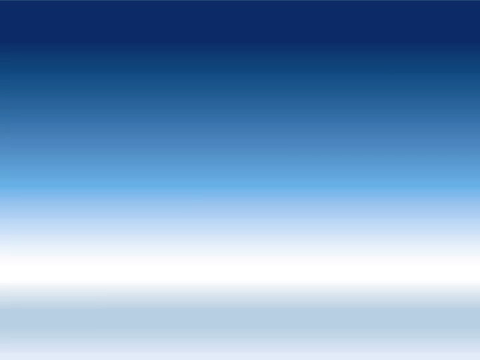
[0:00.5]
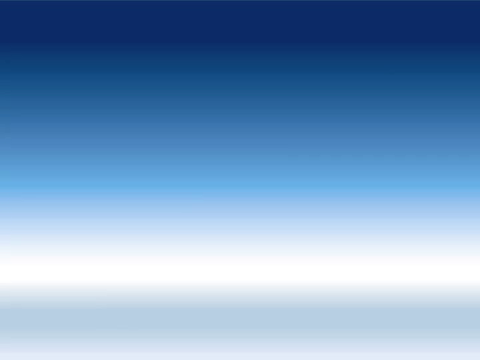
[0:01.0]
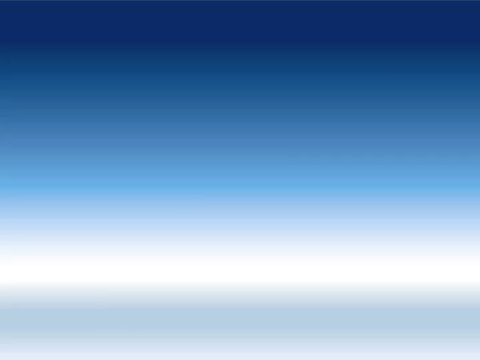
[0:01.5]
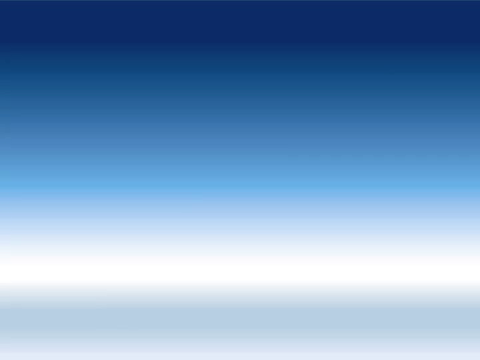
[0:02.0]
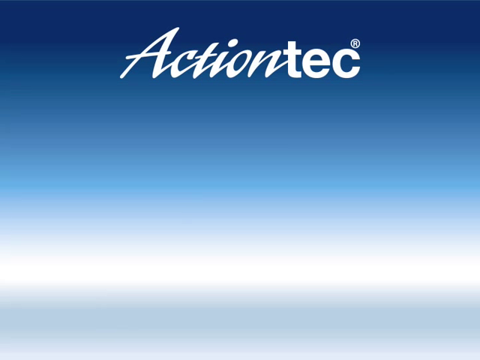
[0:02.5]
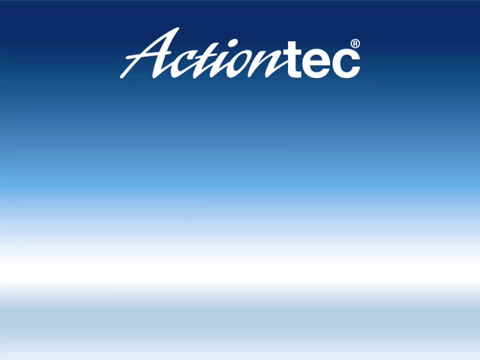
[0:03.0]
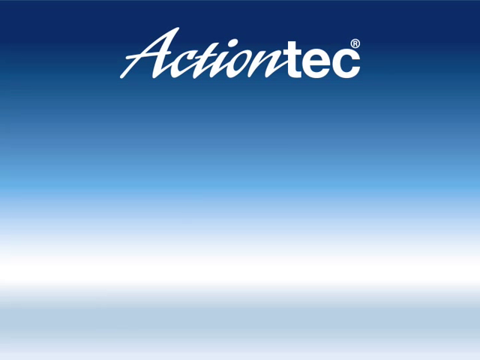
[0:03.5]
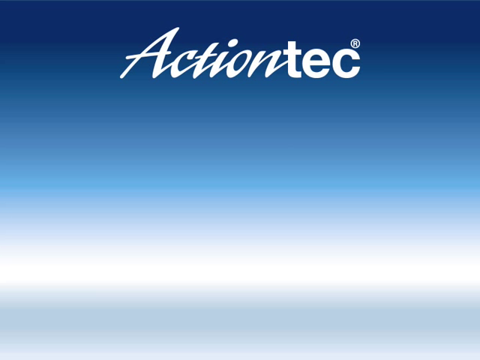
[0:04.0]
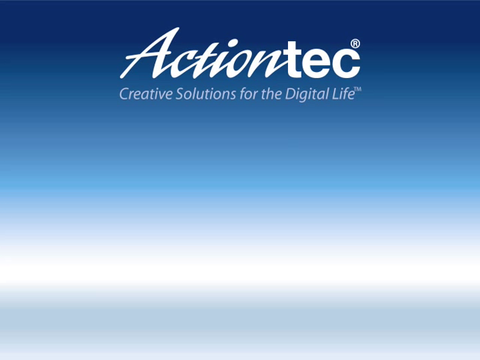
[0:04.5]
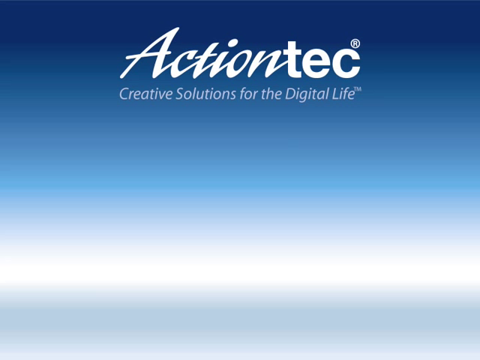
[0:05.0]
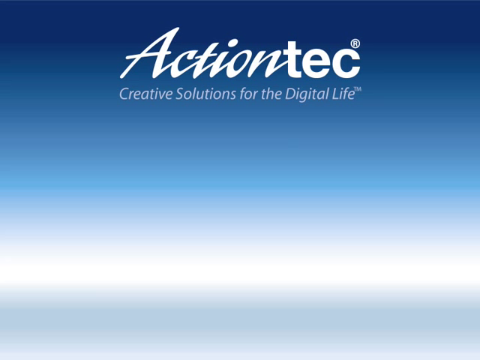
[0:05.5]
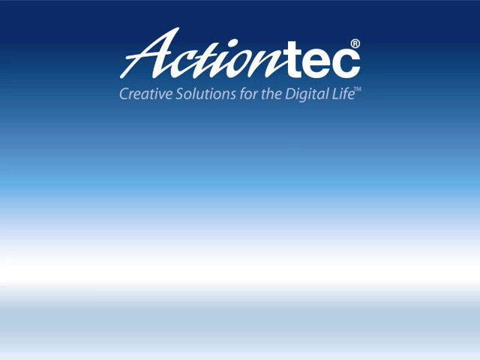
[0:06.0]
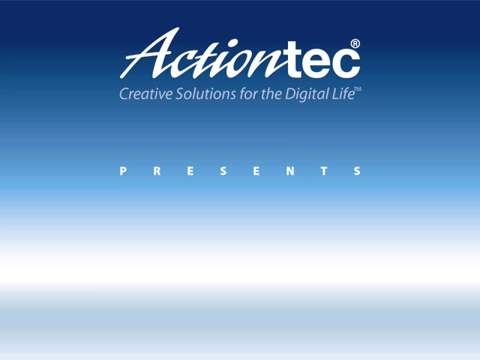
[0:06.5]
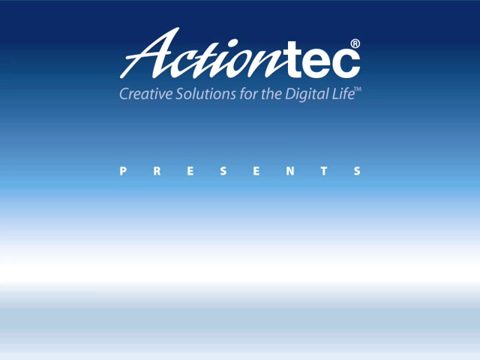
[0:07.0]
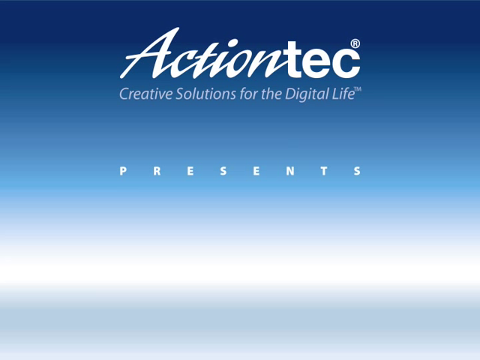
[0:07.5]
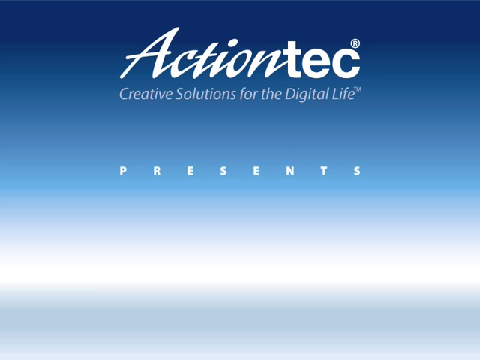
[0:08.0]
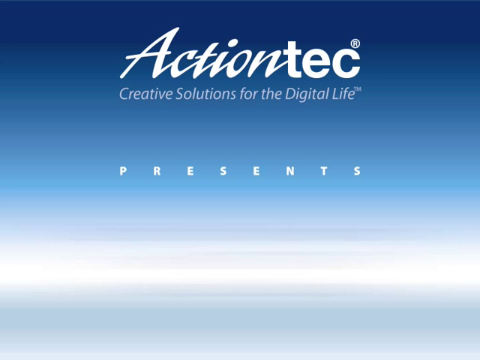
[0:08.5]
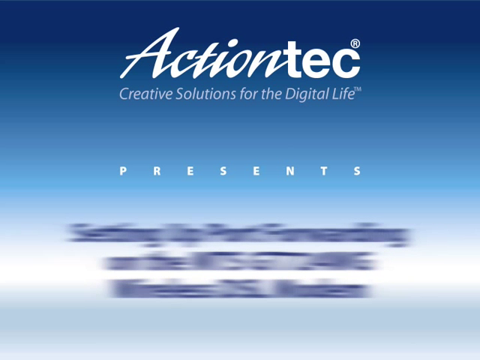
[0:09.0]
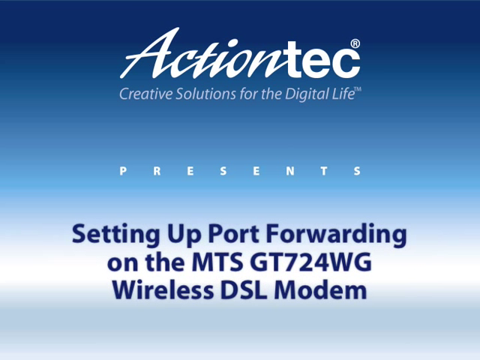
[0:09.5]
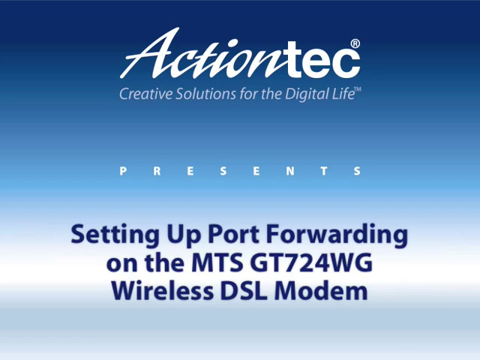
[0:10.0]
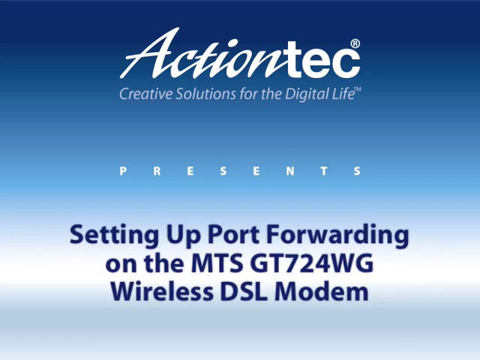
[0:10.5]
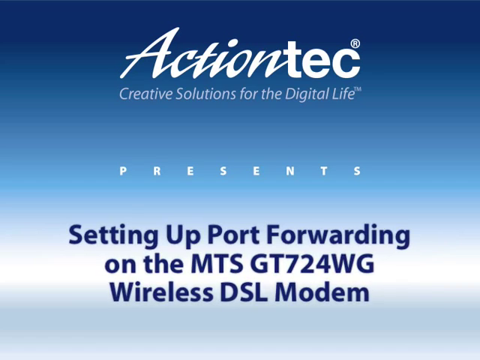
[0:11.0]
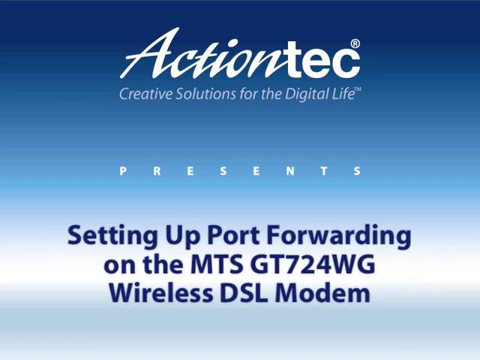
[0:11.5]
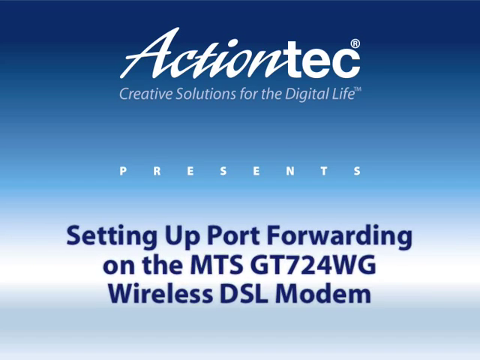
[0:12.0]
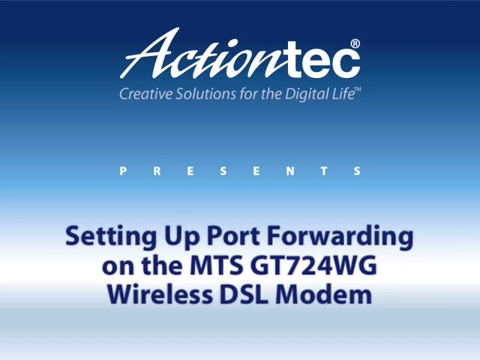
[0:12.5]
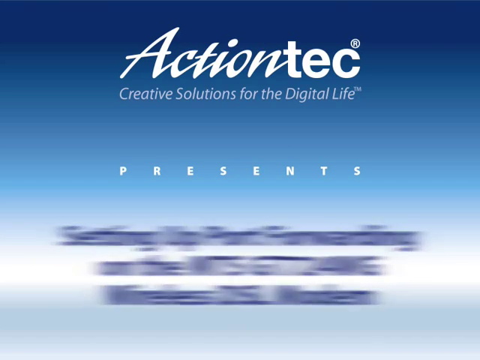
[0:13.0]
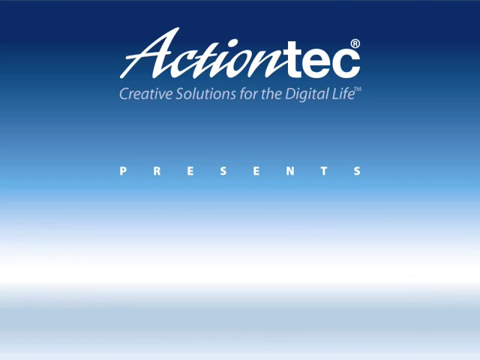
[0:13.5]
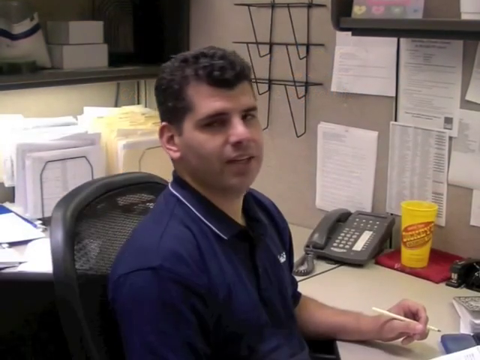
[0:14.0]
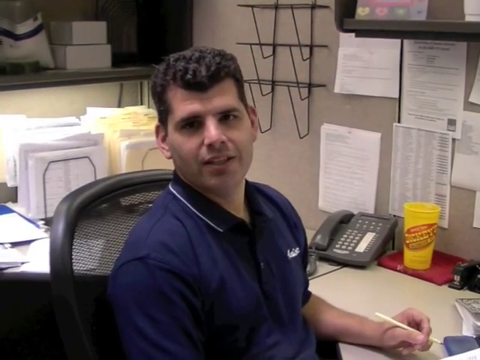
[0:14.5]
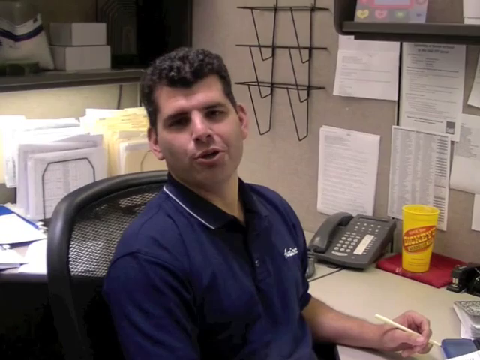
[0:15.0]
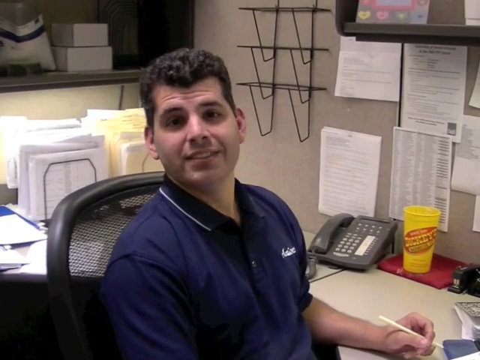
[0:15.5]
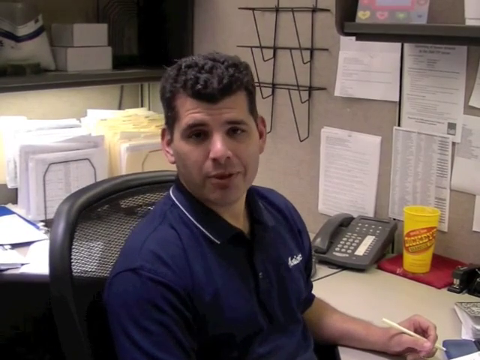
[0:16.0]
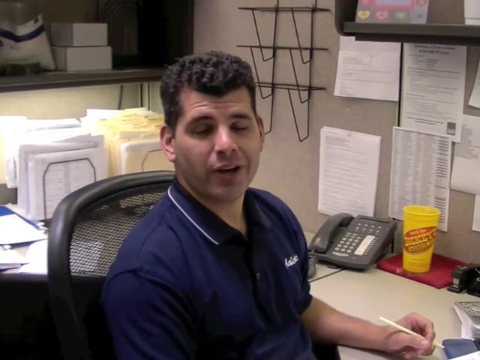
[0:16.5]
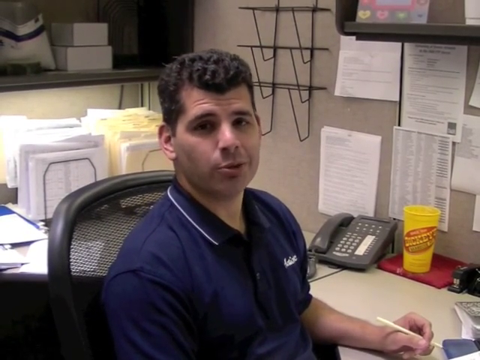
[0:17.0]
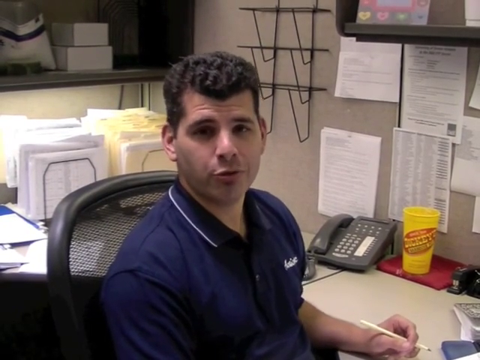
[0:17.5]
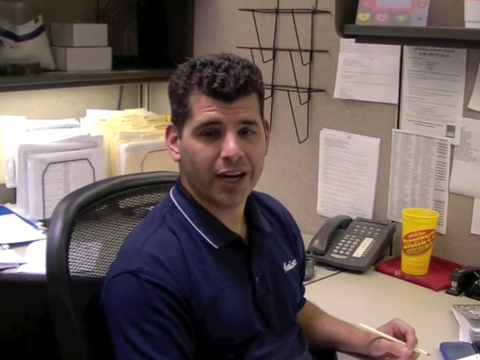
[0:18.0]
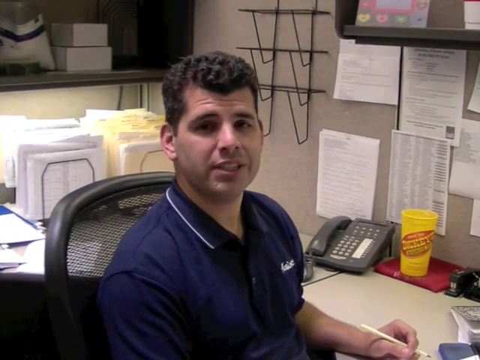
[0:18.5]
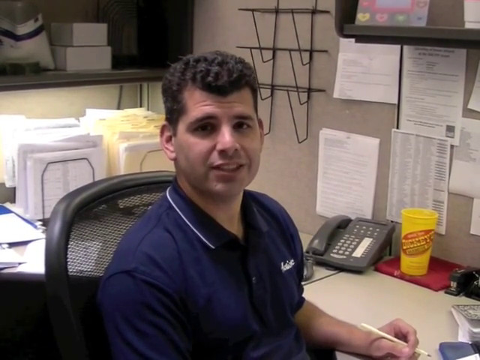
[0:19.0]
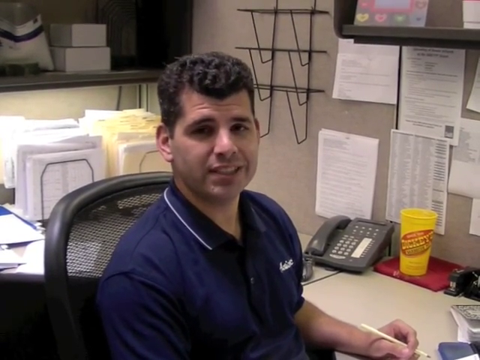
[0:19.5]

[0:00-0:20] A blue backdrop, somewhat sky-like and a little lighter toward the bottom, shows "Action Tech" at the top with a registered trademark sign above it, and below it "Creative Solutions for the Digital Life." It appears to be a presentation of some sort. "Presents" appears in the middle of the screen, followed by "Setting Up Port Forwarding on the MTS-GT724WG Wireless DSL Modem." The title fades away, and an individual appears, apparently a white male in his late 20s or early 30s. He is in an office-type setting that looks like a small office, with a lot of paperwork around. He wears a blue short-sleeve shirt, apparently with a crew neck, and with points at the ends of the collar. He speaks a little, seated in a black chair with a mesh back that can be seen through slightly.